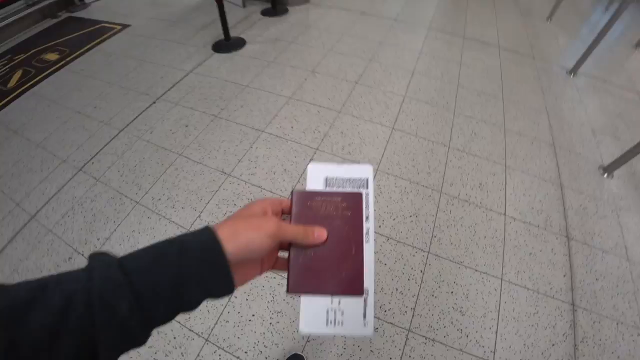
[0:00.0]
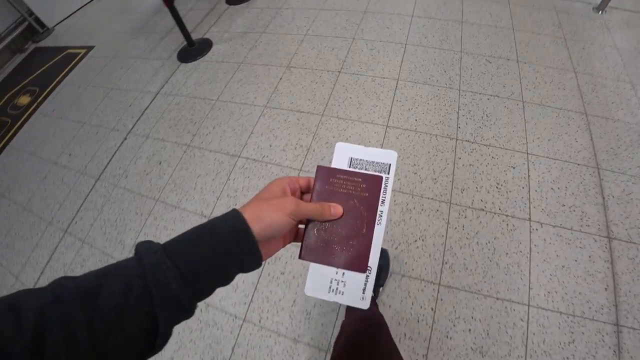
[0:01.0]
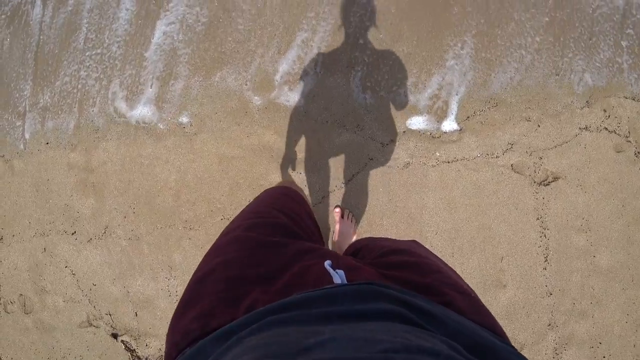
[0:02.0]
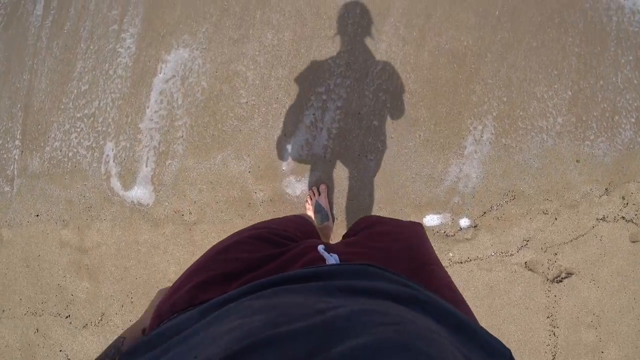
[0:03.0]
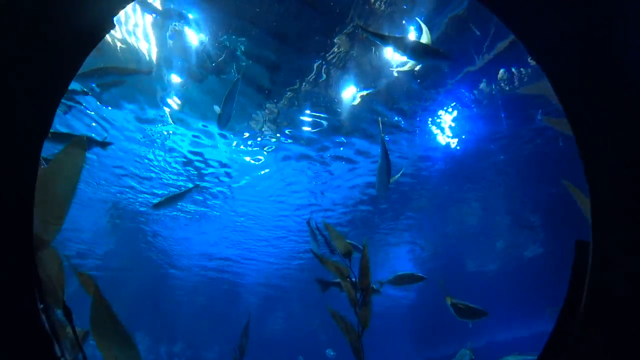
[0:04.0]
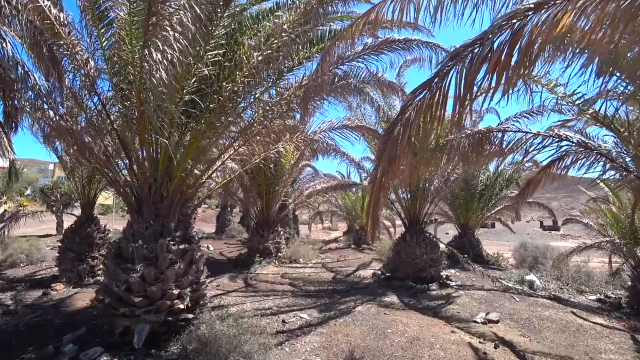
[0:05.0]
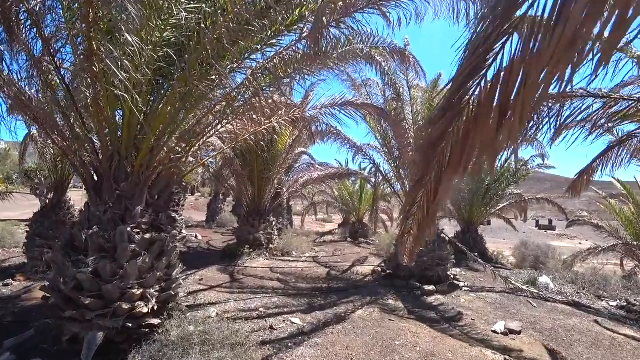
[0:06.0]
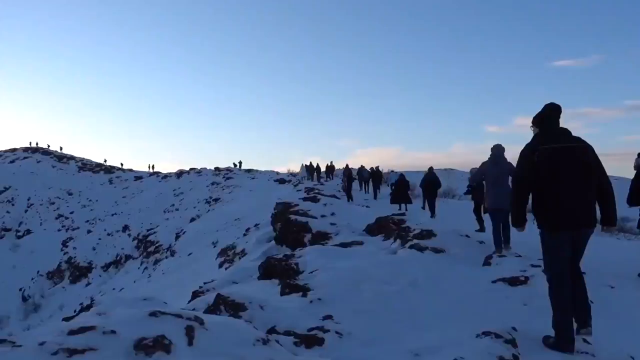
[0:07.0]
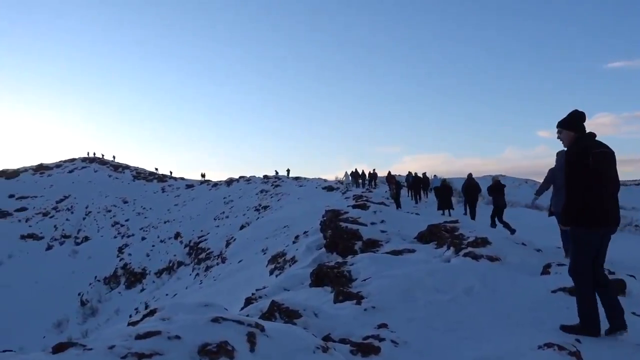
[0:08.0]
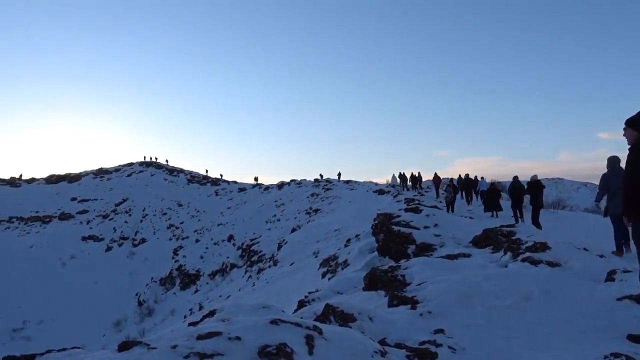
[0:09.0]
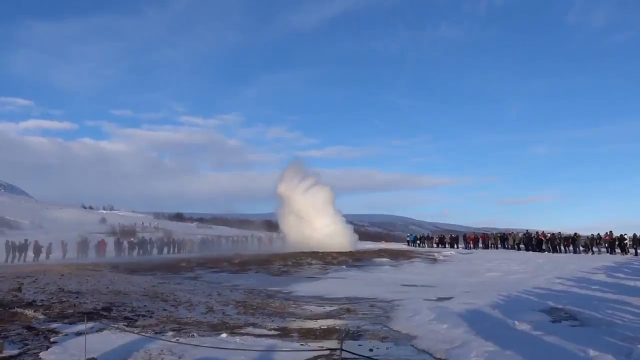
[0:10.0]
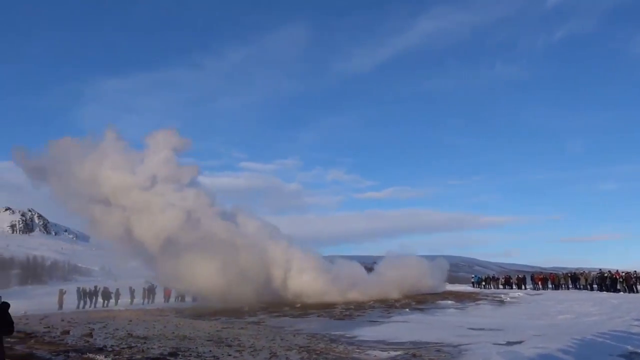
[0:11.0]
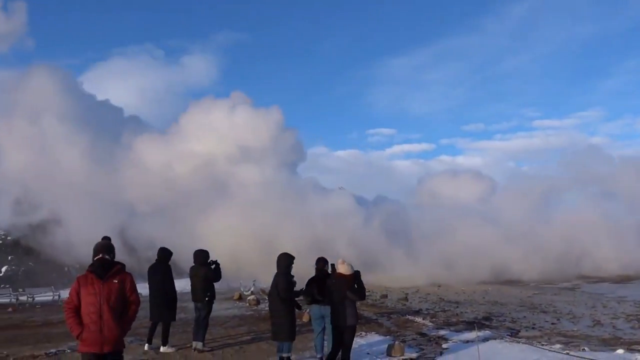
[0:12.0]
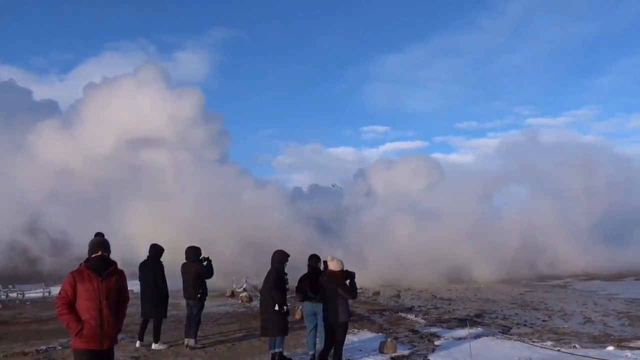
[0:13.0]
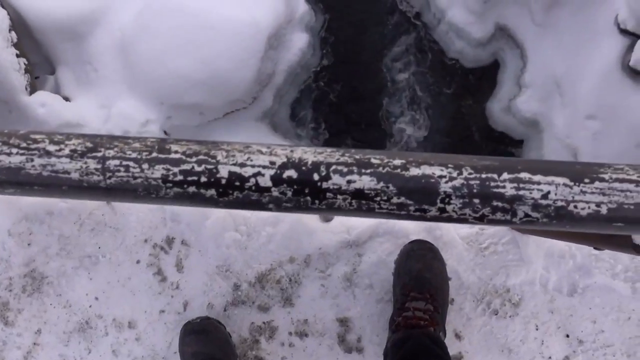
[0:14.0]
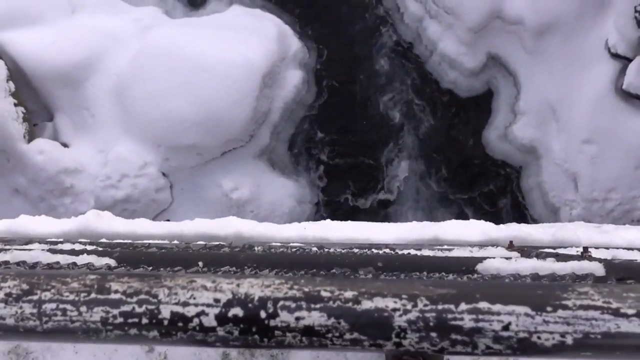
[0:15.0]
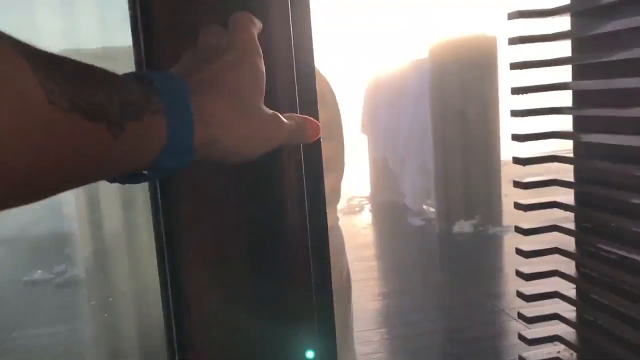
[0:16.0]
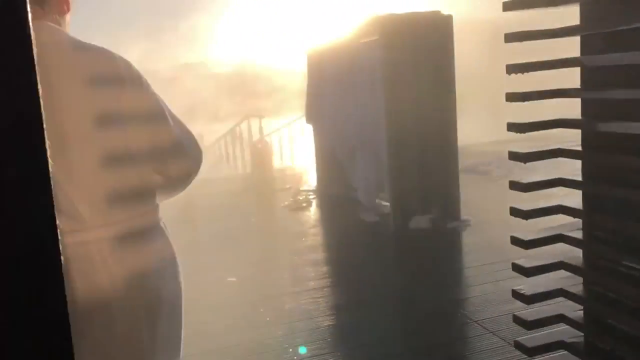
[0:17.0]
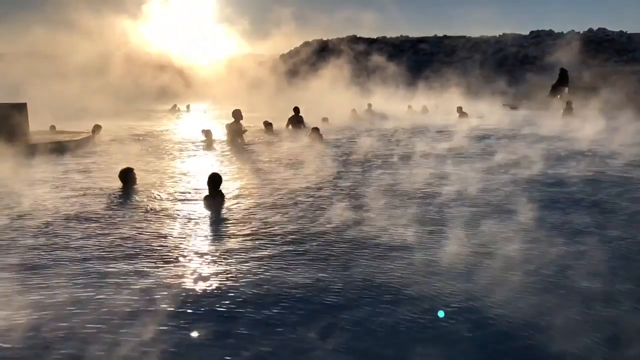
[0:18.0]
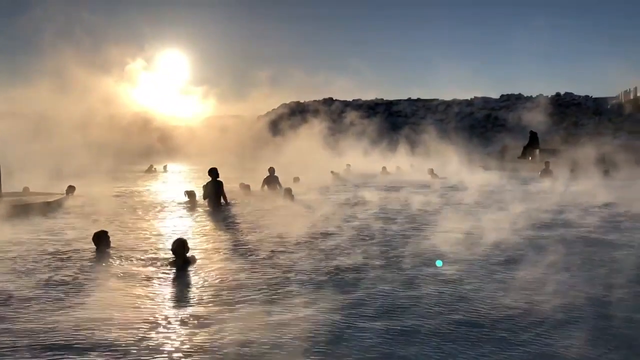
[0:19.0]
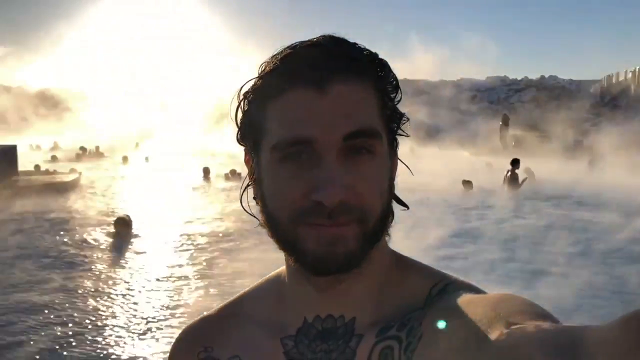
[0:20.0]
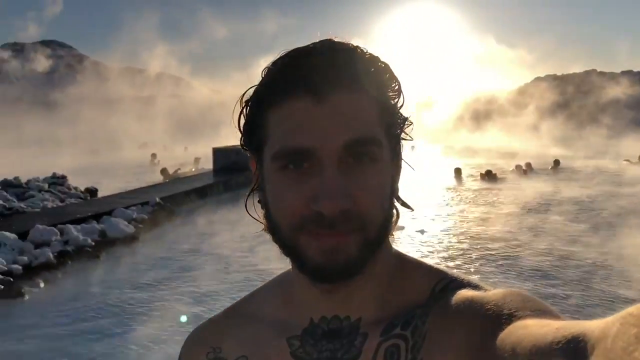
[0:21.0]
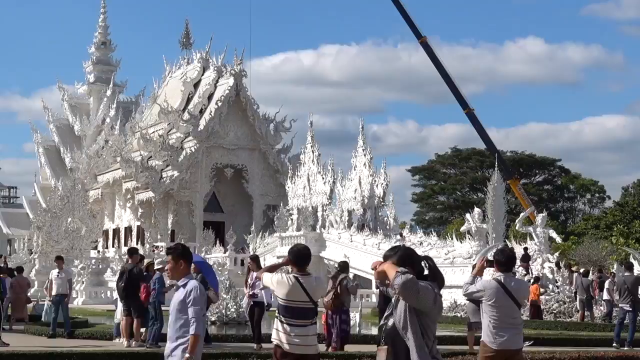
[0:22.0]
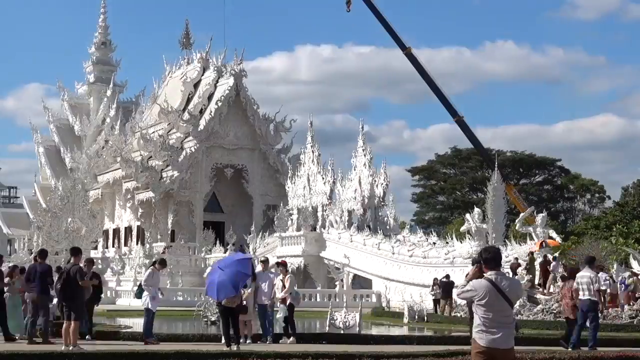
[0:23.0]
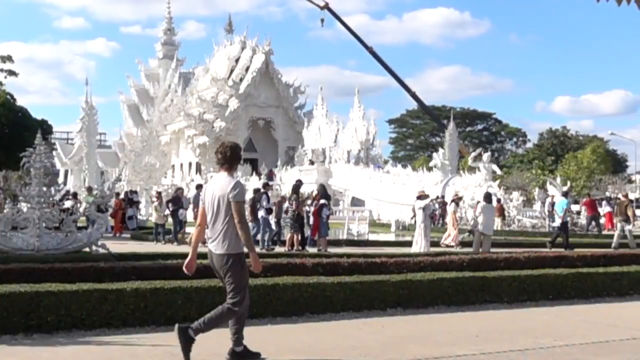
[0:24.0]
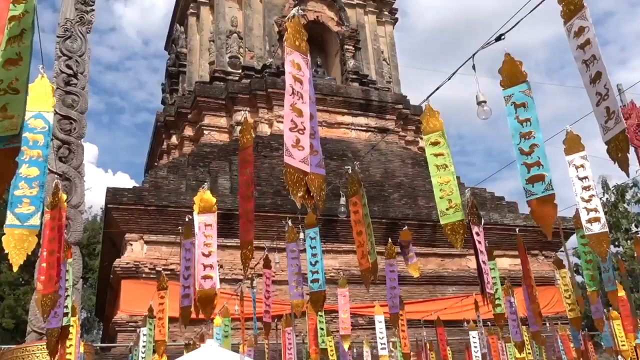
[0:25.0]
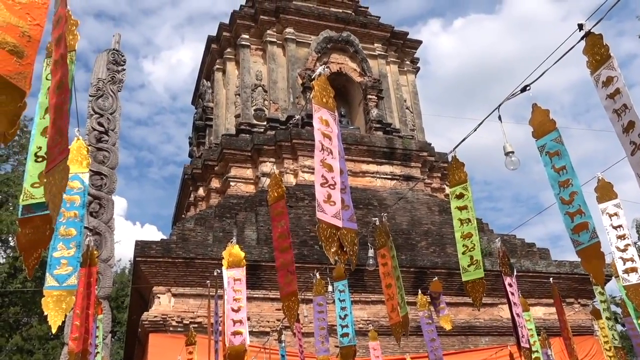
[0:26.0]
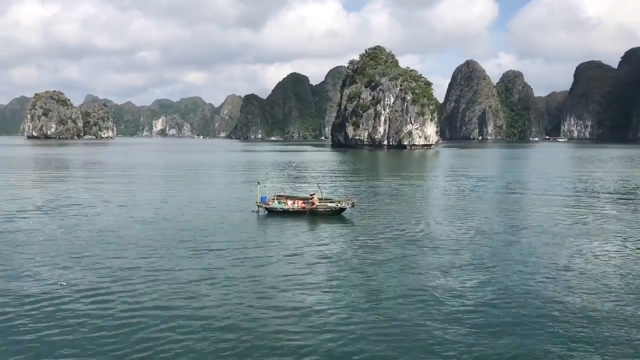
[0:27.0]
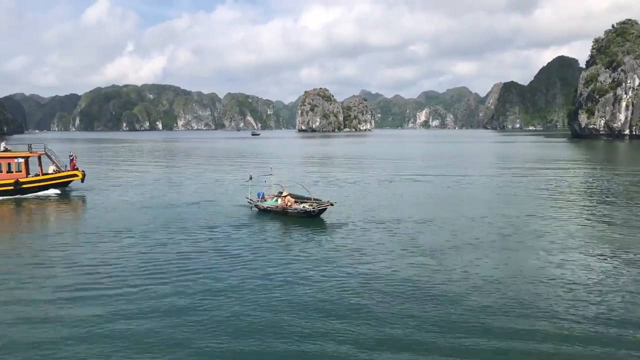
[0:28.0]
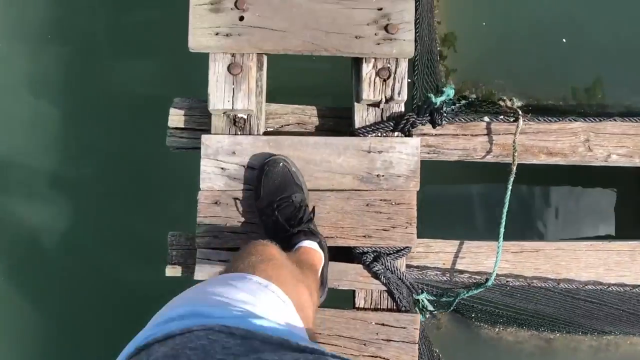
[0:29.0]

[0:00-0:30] A person's hand holds a red passport, followed by a view of an underwater aquarium with lots of small sharks in it. Palm trees appear out in the wilderness, and people walk on snow-covered mountains. A hot spring comes out of one of the snow-covered mountains. From a height, water meanders below, snaking its way between snow-covered terrain. People pass through doors and open doors, people swim in hot springs, and steam rises from the hot springs. A man smiles. A temple that looks like a castle has people watching, and a person walks past the temple. A boat appears, and a man walks on a wooden walkway. As he walks, what look like huge, tall rocks sprout out of the water. The rocks look well polished and weather-beaten; there are quite a lot of them, and they are in the distance. A small boat is also sailing on the water.